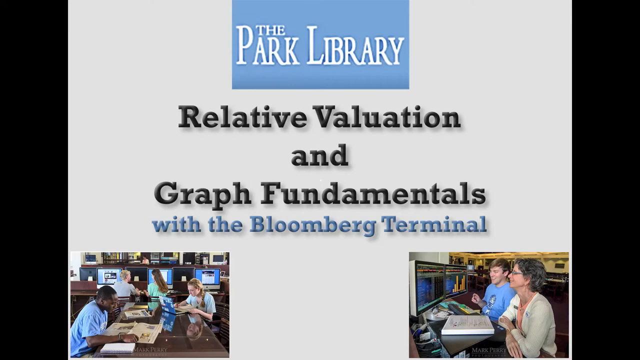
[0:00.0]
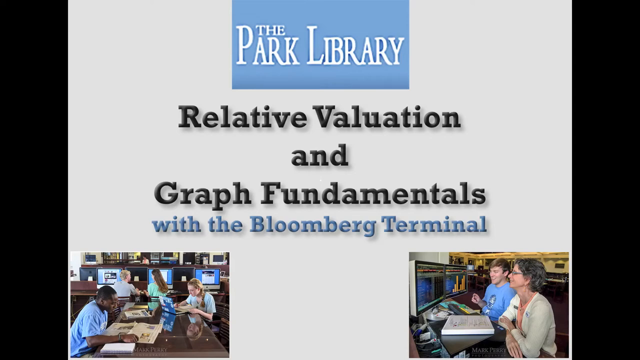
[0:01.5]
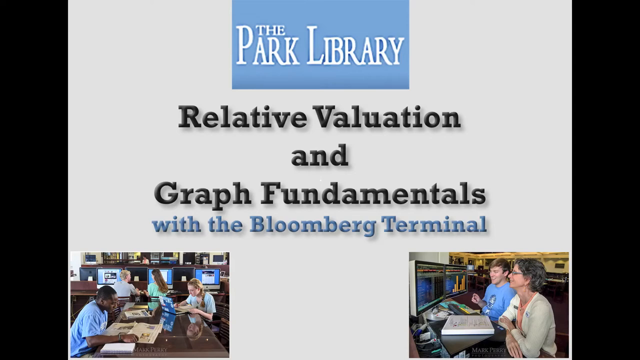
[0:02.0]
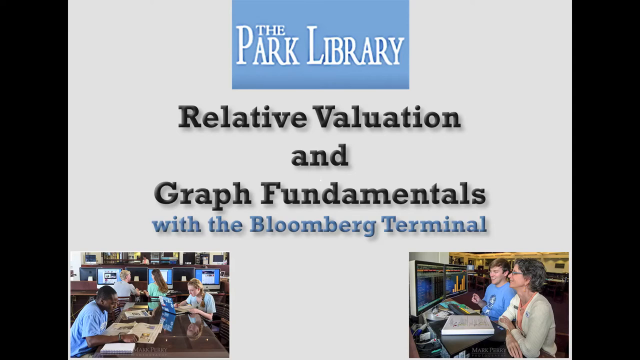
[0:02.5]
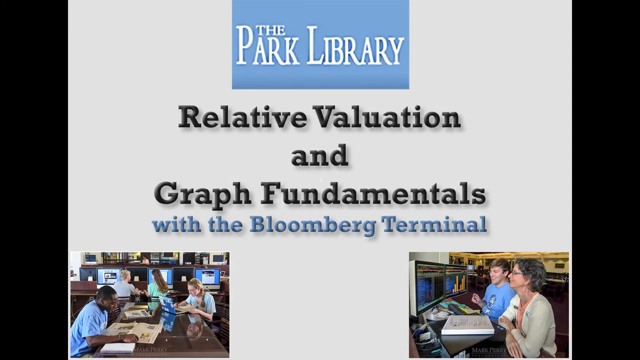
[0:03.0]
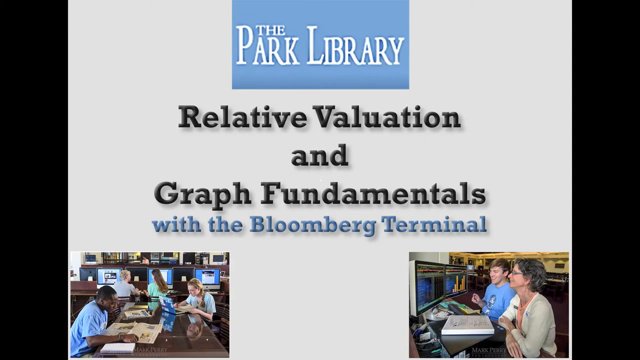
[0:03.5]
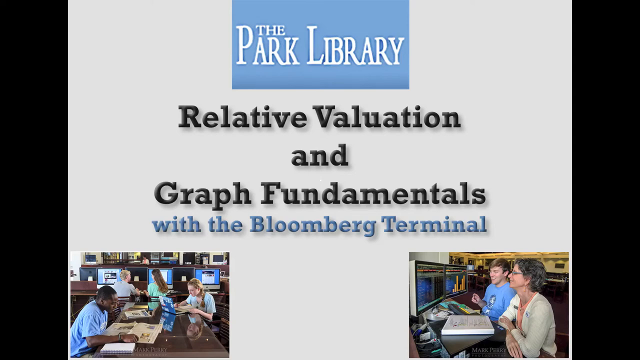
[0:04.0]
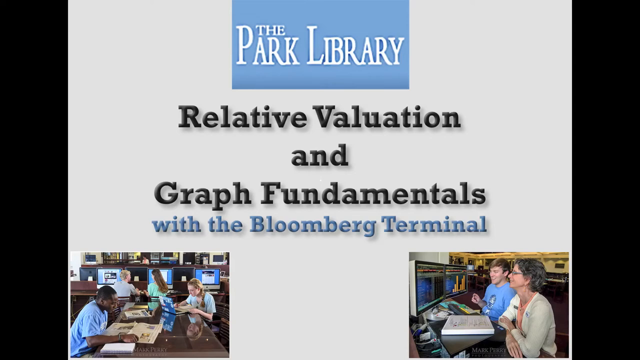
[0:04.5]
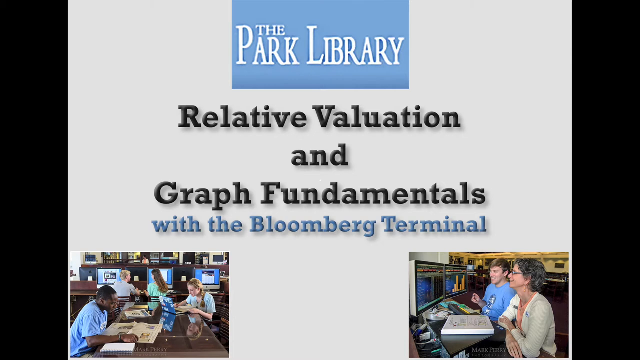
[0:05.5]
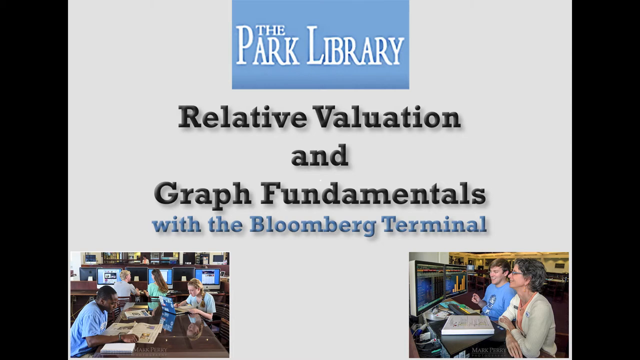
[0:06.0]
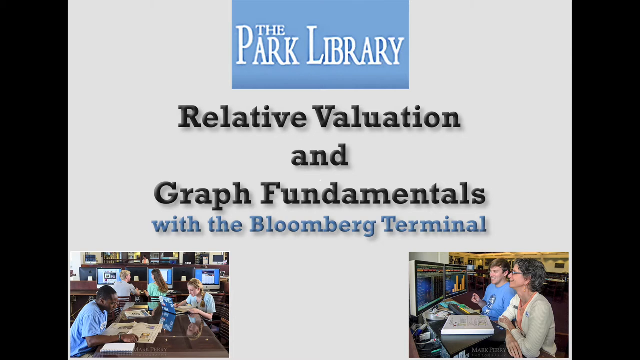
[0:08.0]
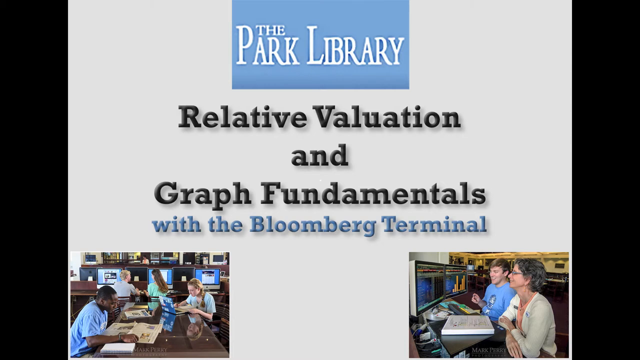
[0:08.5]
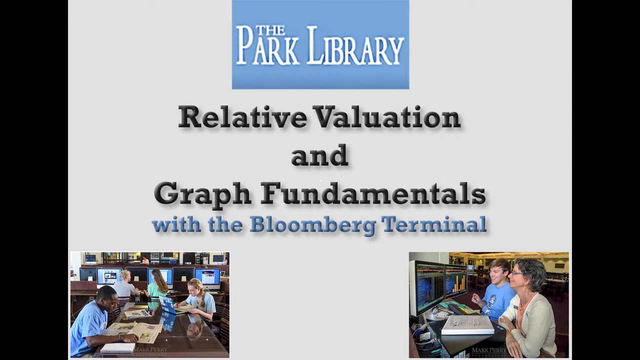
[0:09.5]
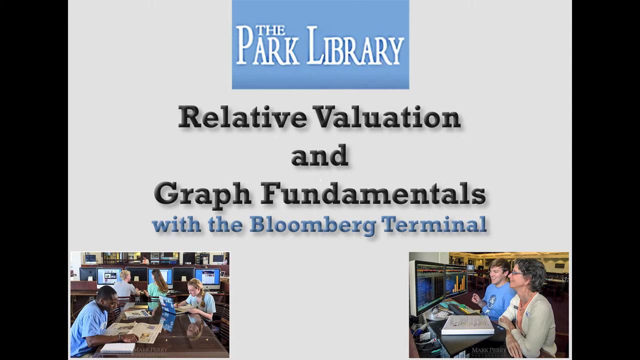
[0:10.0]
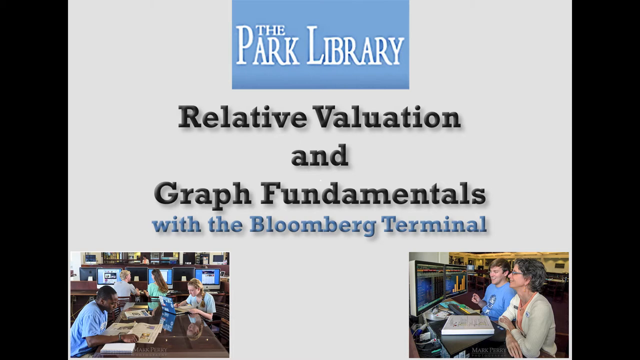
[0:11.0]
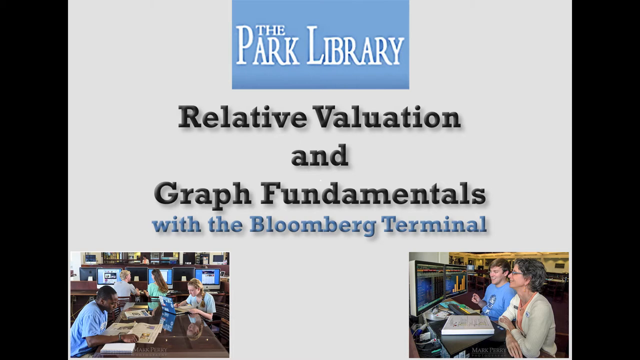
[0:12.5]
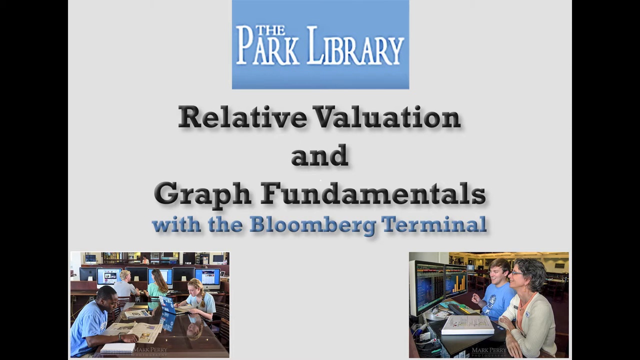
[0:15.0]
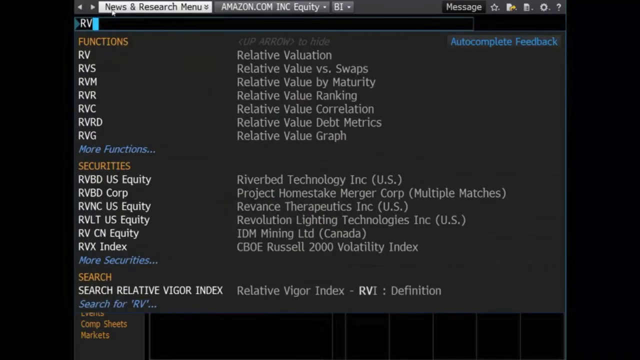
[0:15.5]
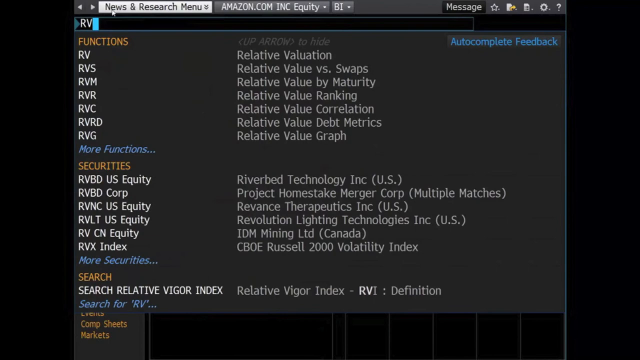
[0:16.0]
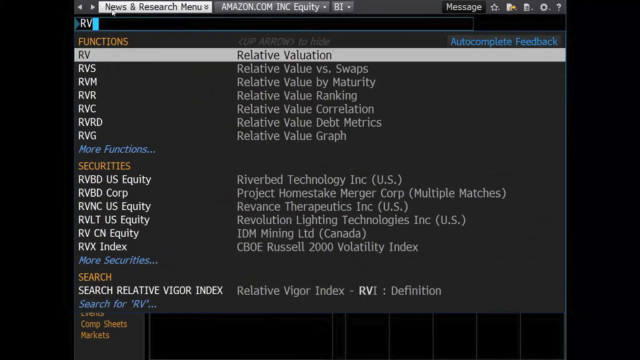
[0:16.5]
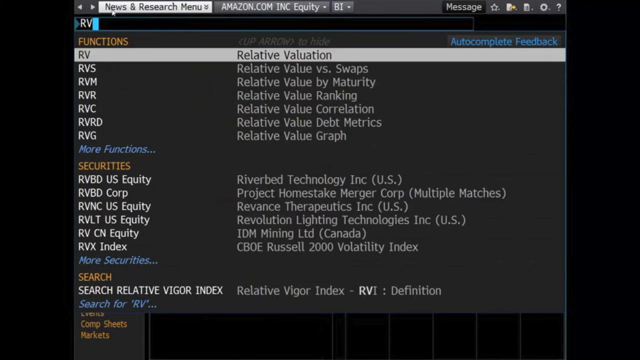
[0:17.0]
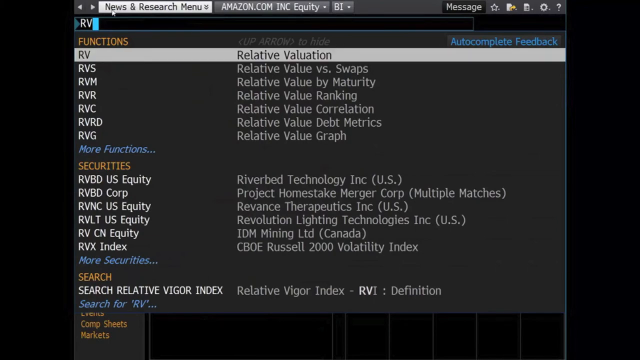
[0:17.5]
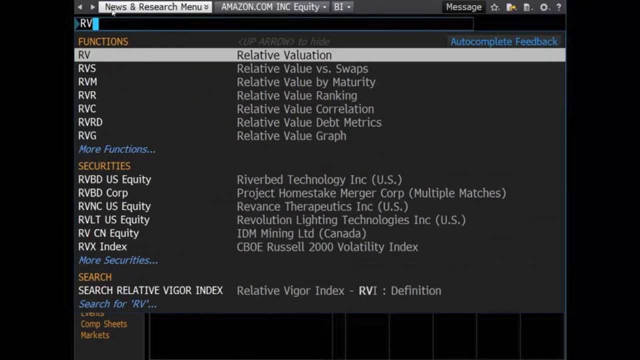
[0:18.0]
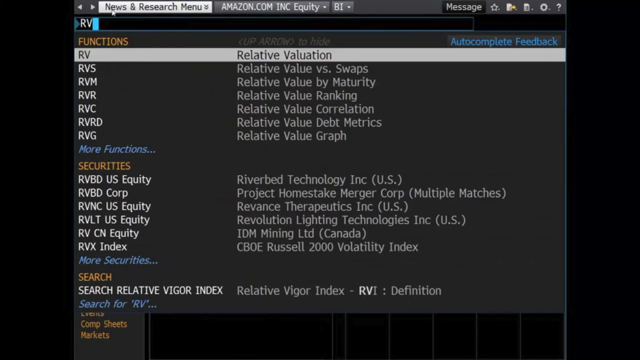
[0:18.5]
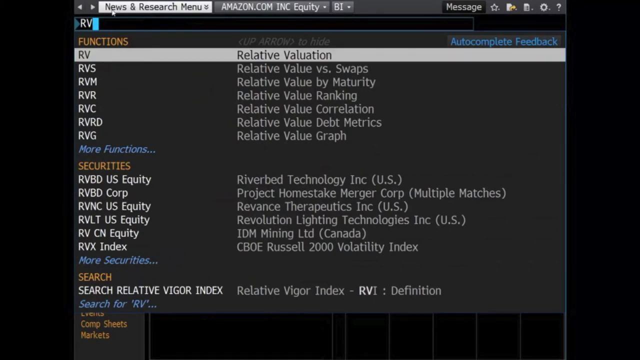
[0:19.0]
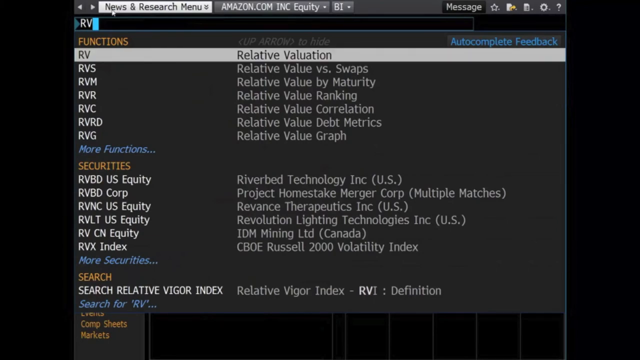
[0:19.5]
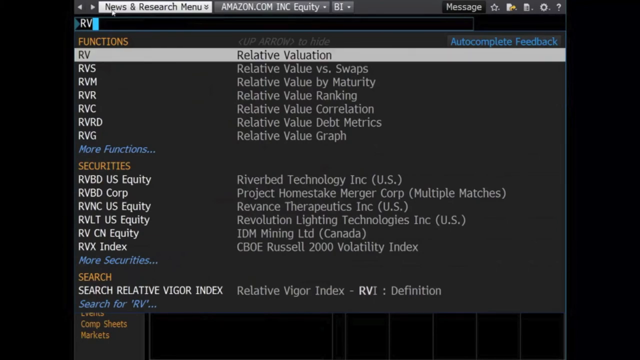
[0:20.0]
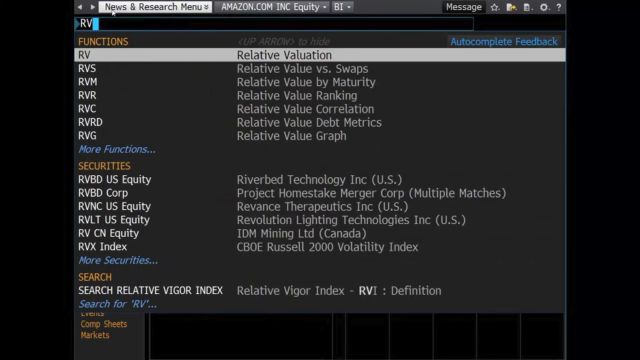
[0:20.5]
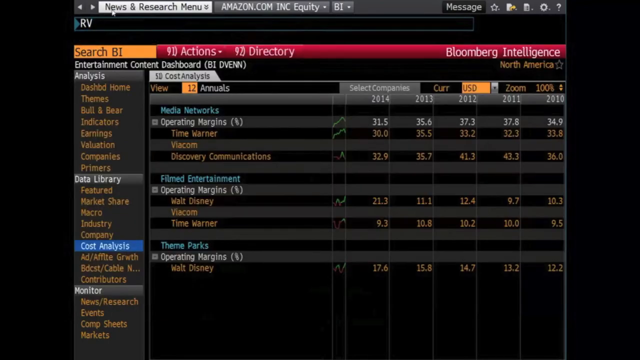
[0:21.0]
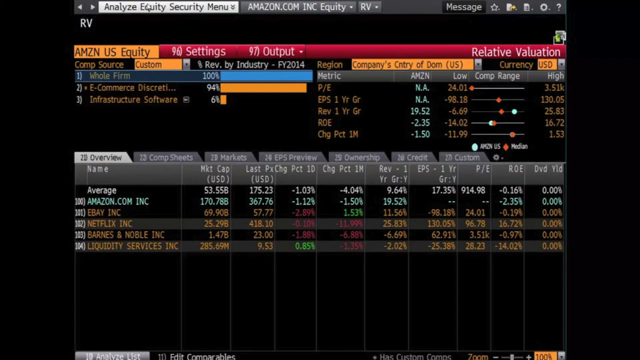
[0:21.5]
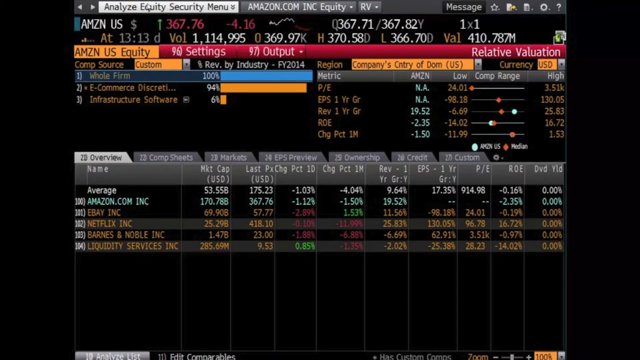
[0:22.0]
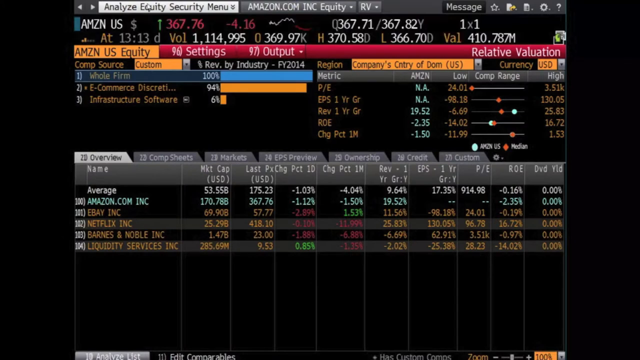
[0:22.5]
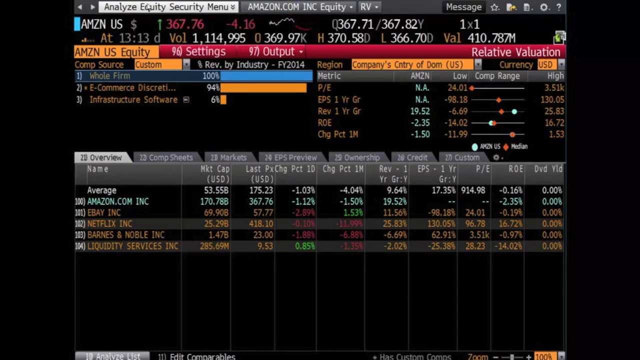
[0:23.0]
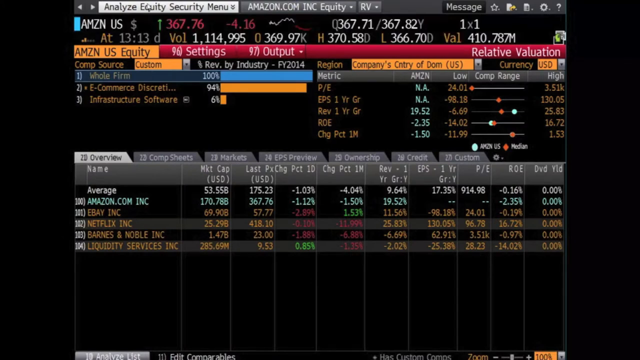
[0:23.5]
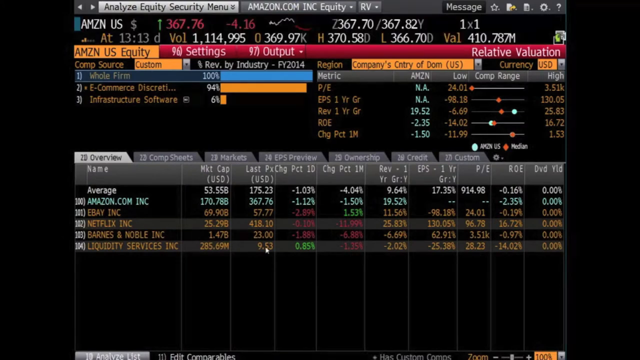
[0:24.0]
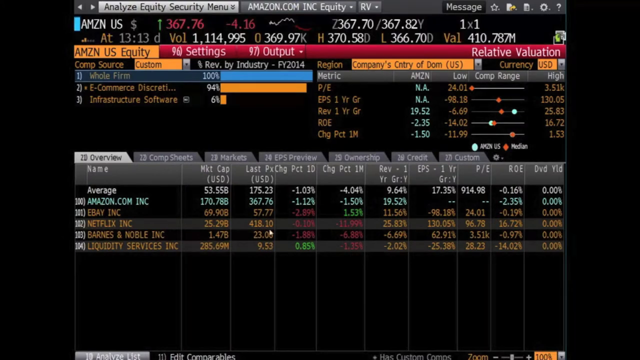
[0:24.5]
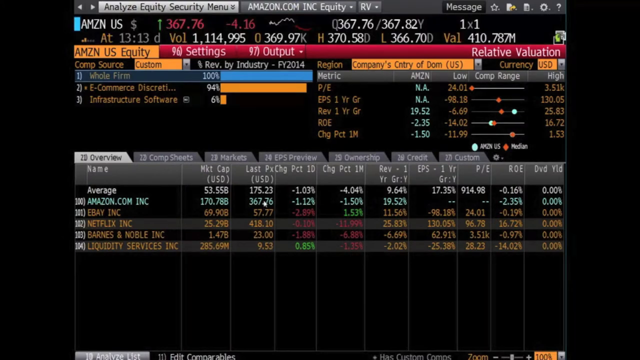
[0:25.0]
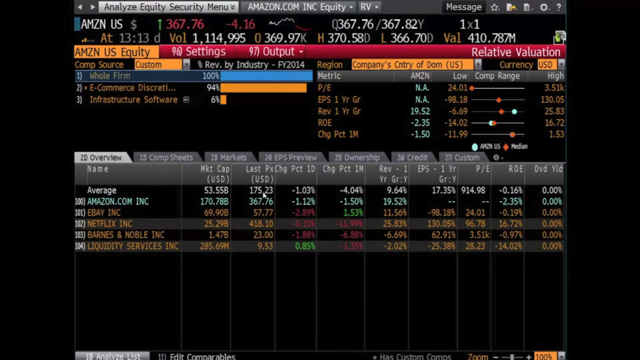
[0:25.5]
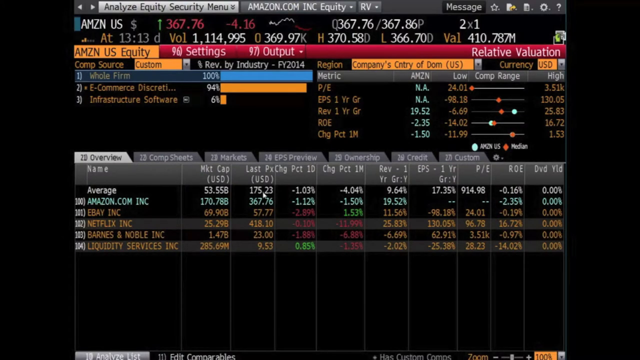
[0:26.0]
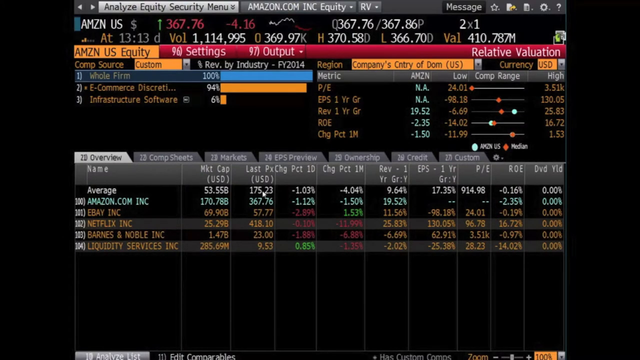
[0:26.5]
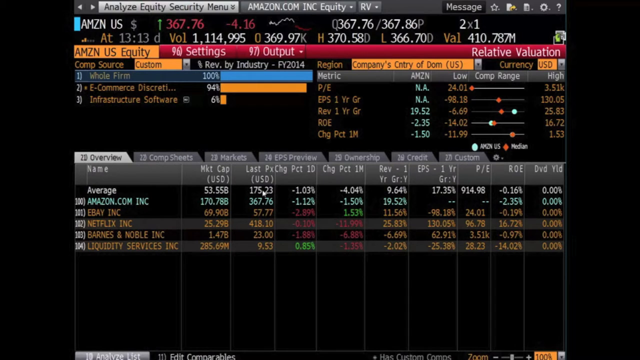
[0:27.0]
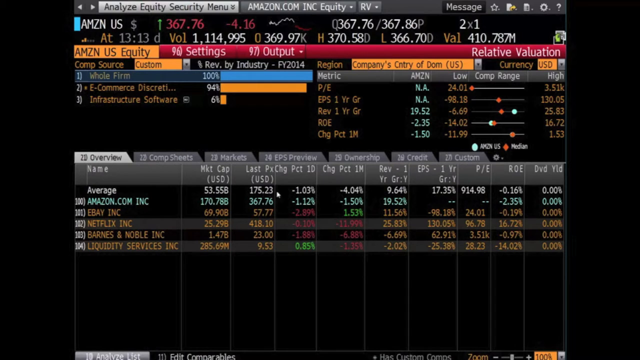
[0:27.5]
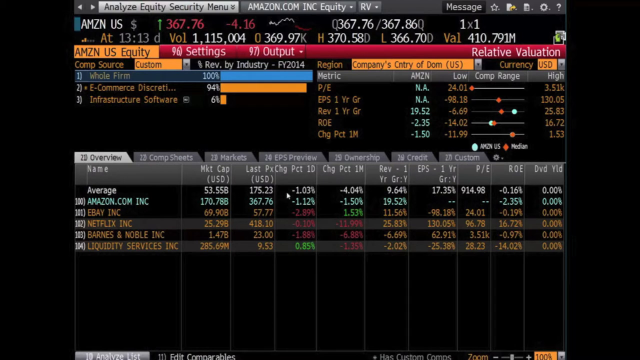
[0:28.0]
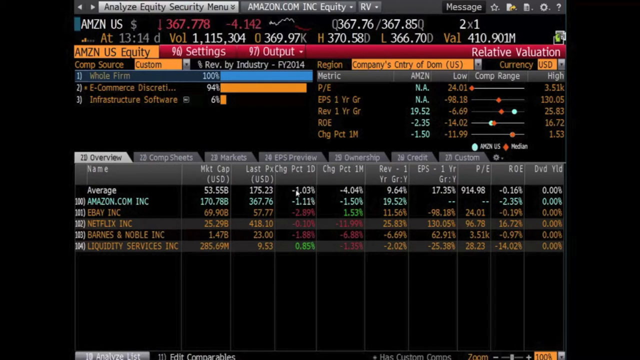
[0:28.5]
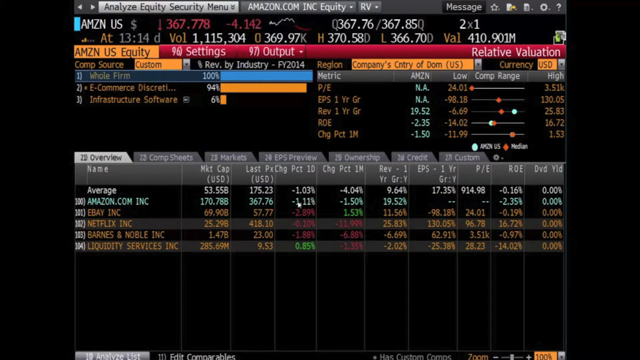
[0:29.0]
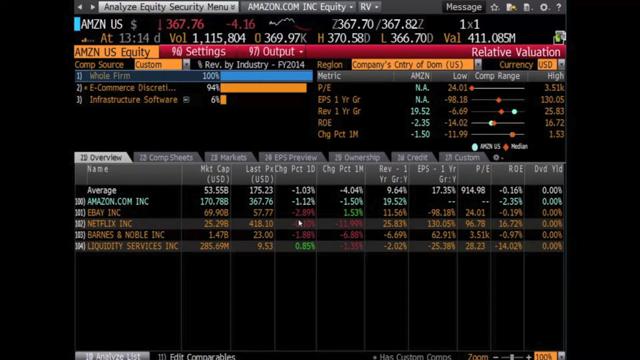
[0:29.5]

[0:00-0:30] The video is a presentation about relative valuation and graph fundamentals with the Bloomberg terminal, made by the Park Library. The first picture contains this information, and besides the text it has two pictures, one in the bottom left and one in the bottom right. The bottom-left picture shows students working: two students sit in front of computers, a third sits doing something on her laptop, and the last student reads something in a book or a newspaper. The bottom-right picture shows an older woman and a younger student; she is probably teaching him something about stocks, or maybe about relative valuation and graph fundamentals, in a moment where the older generation teaches the younger generation. After this title picture, a program appears holding information about firms such as Amazon, eBay, Netflix, Barnes & Noble and Liquidity Services. The information includes market cap, USD, last price, change and change price, apparently related to stocks. There is a lot of data: many percentages, highs and lows, names and various bars, suggesting software or a site showing how the firms are doing financially.